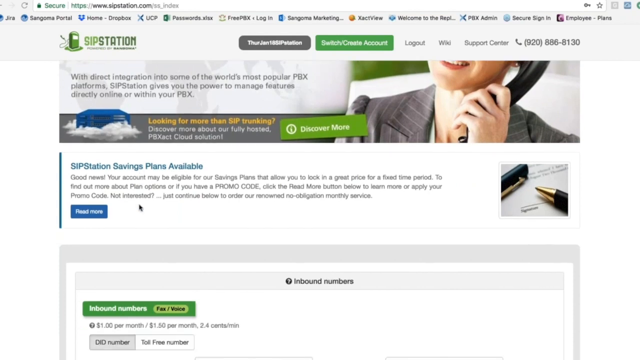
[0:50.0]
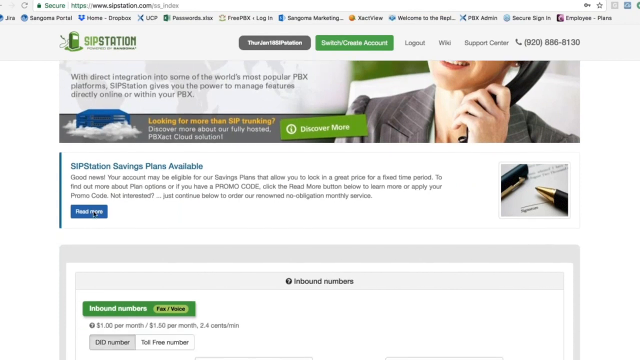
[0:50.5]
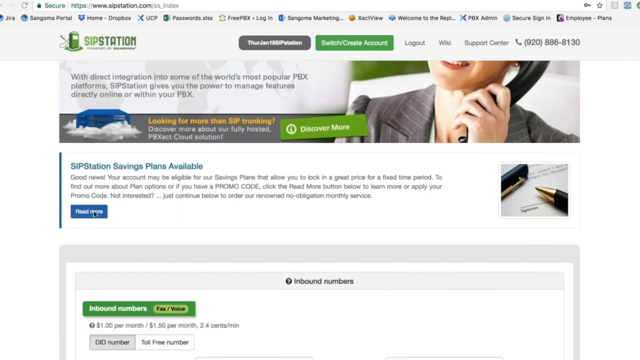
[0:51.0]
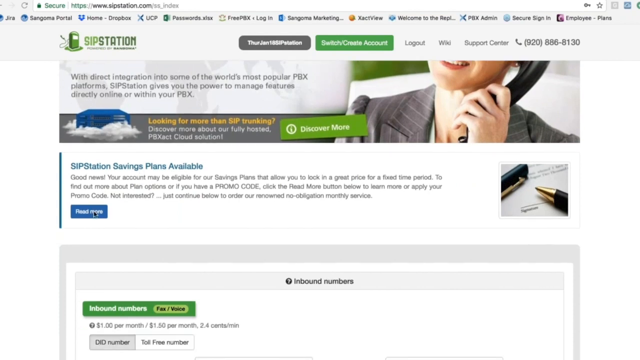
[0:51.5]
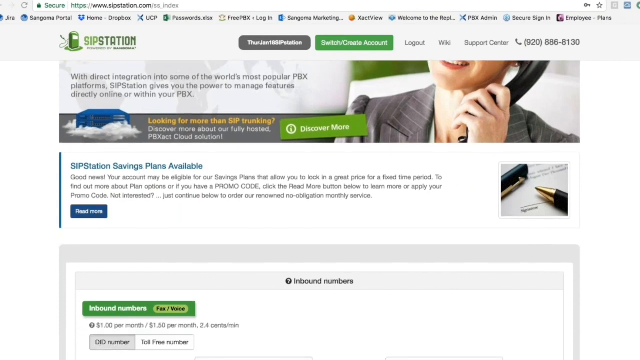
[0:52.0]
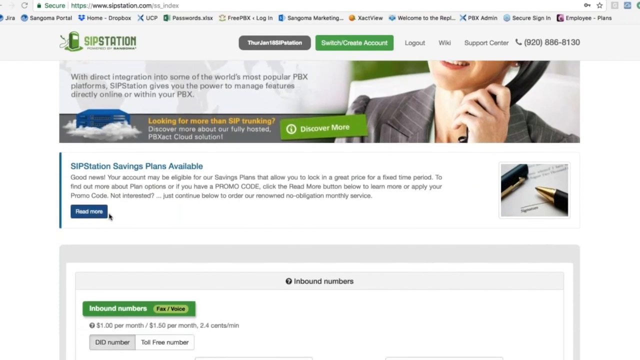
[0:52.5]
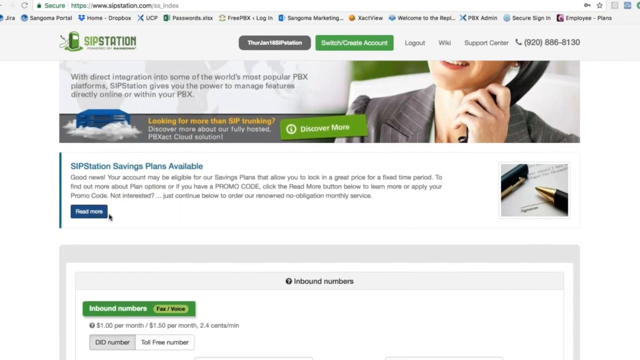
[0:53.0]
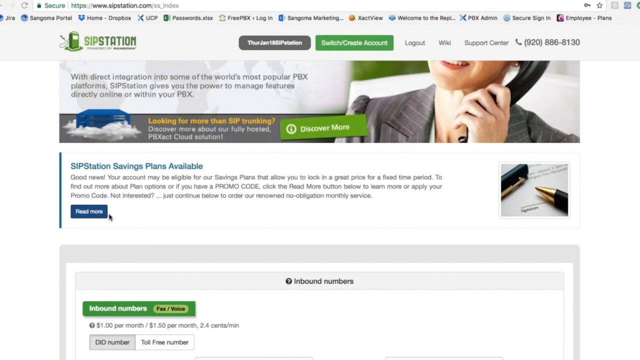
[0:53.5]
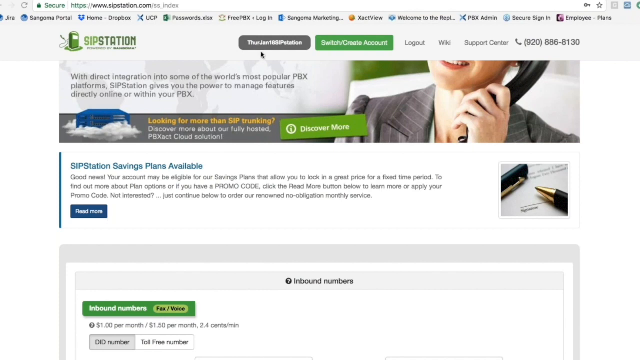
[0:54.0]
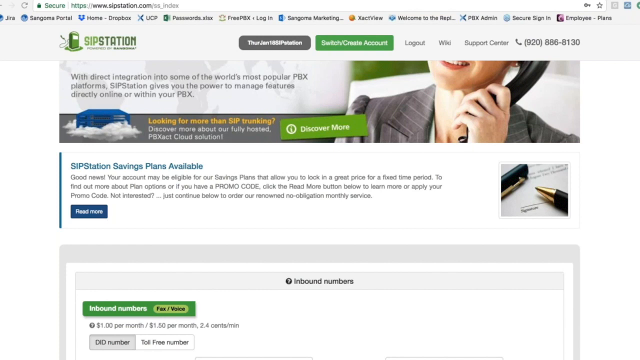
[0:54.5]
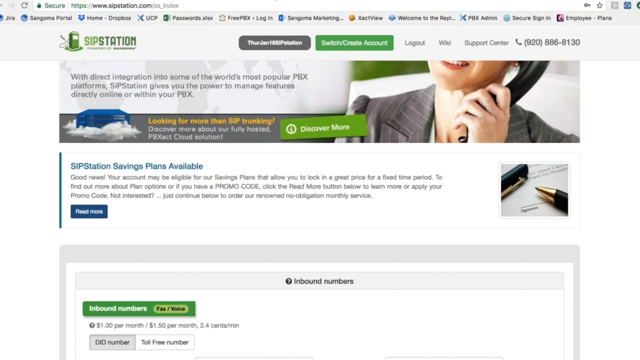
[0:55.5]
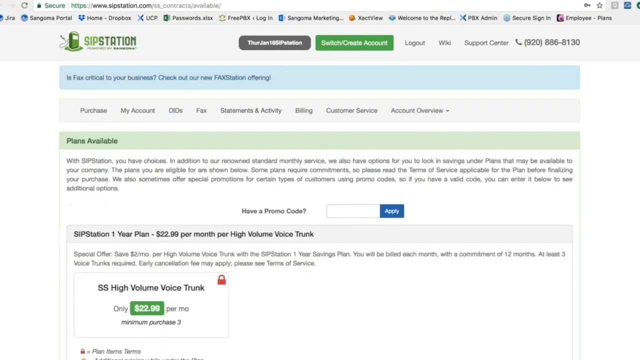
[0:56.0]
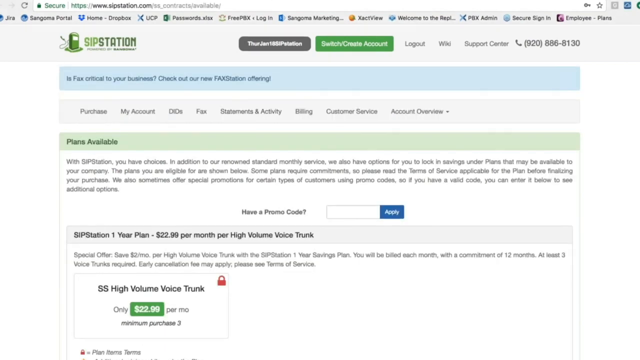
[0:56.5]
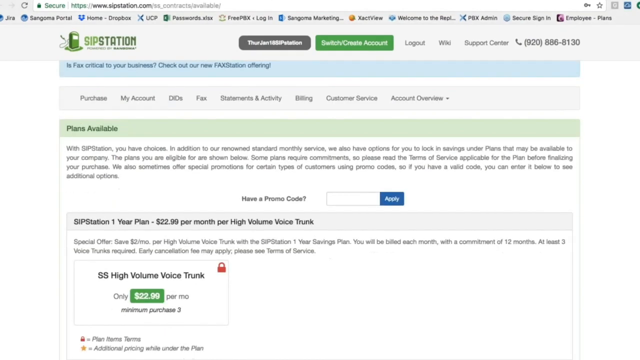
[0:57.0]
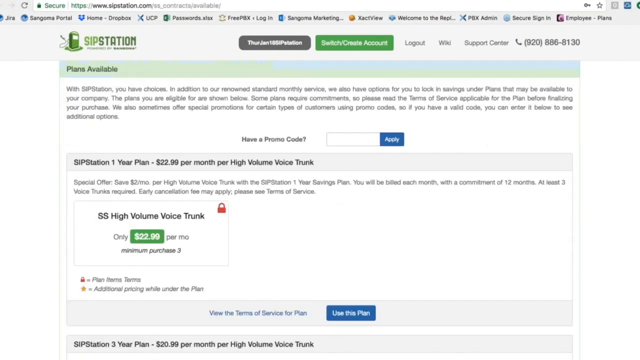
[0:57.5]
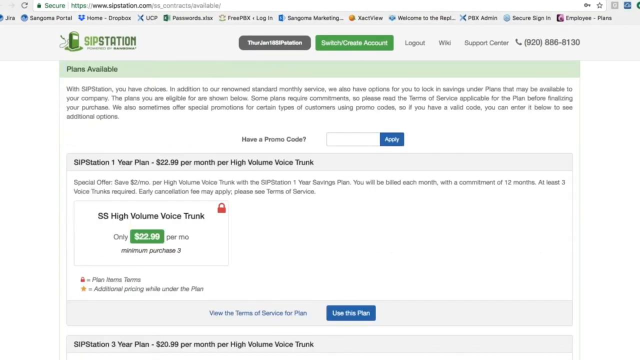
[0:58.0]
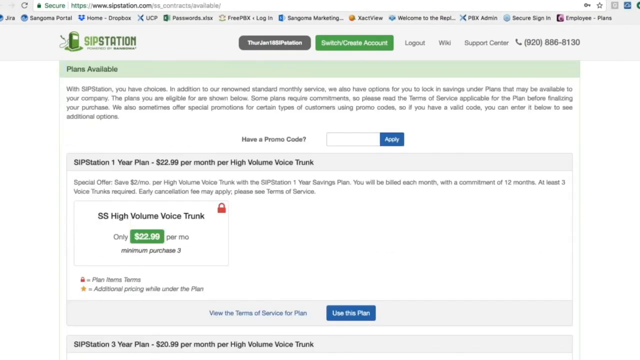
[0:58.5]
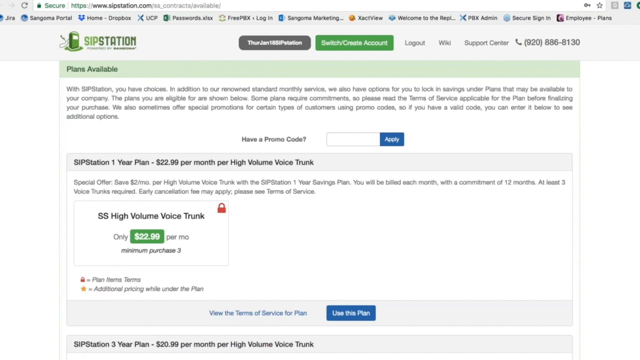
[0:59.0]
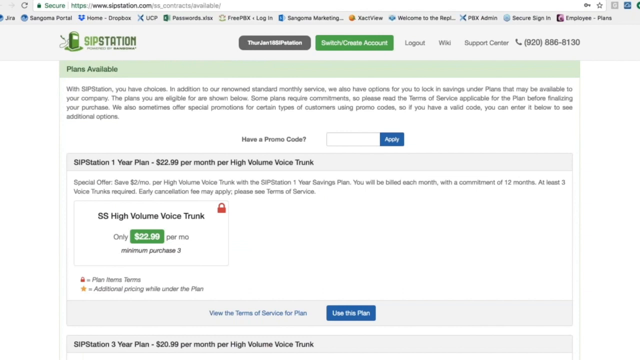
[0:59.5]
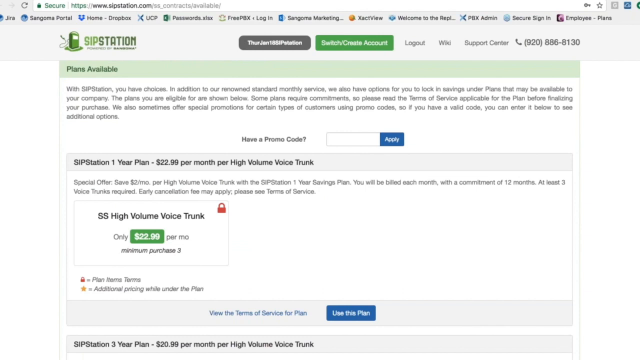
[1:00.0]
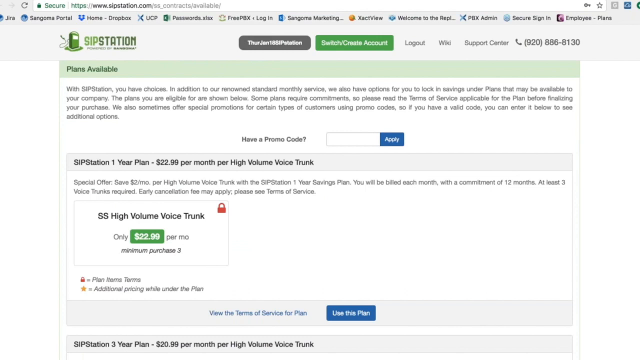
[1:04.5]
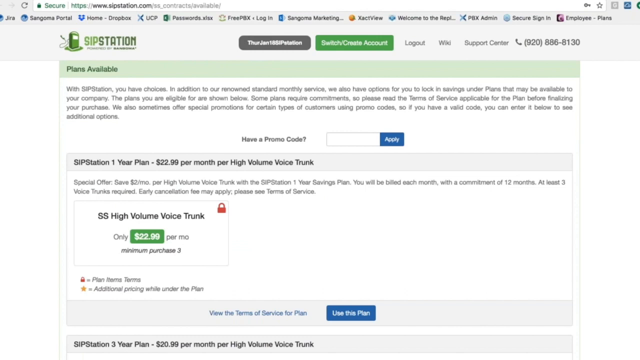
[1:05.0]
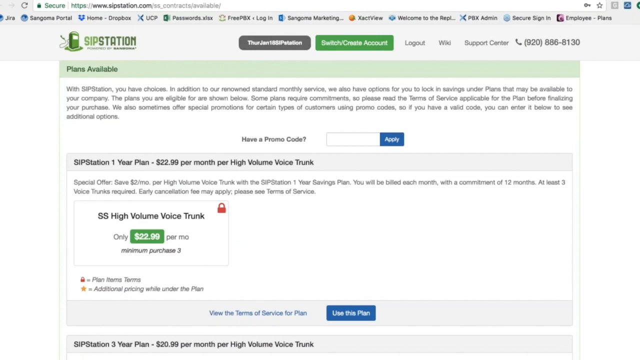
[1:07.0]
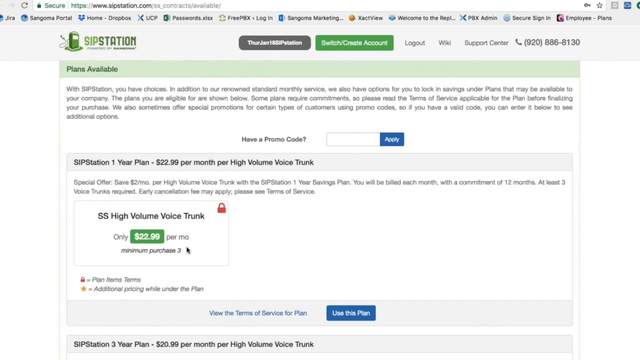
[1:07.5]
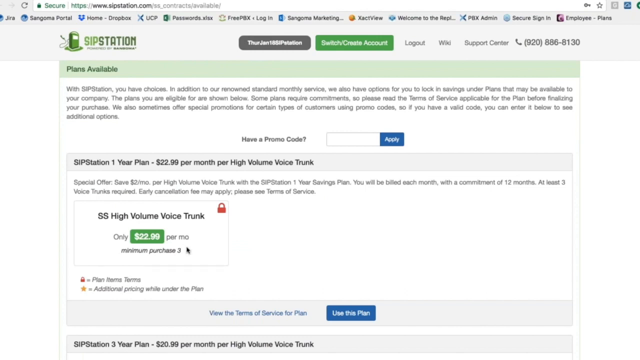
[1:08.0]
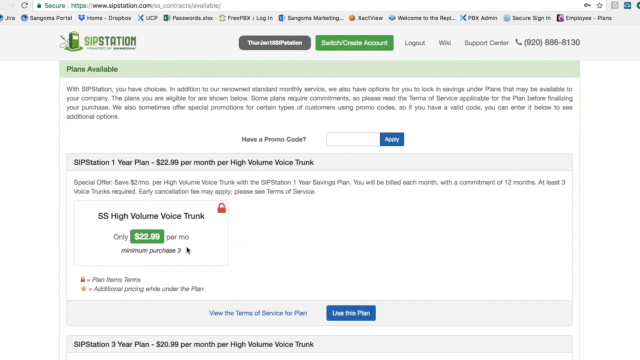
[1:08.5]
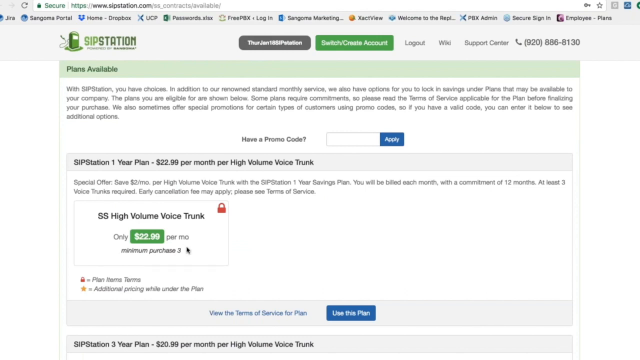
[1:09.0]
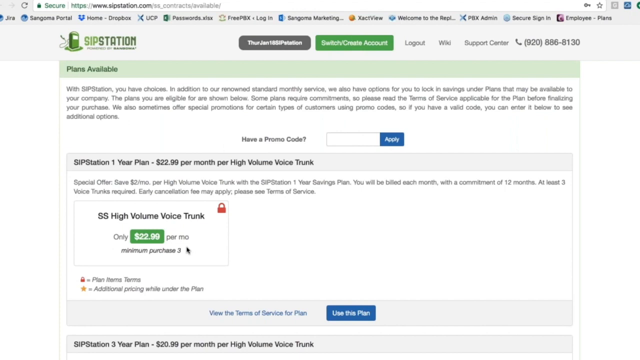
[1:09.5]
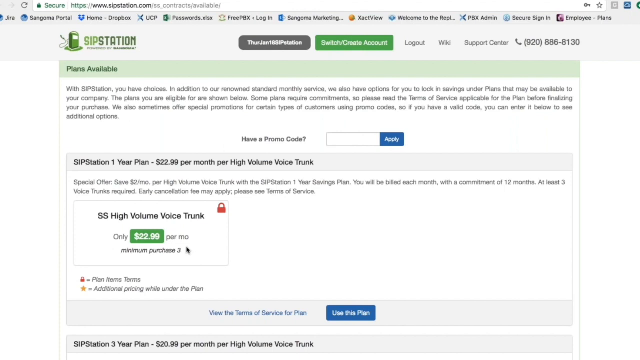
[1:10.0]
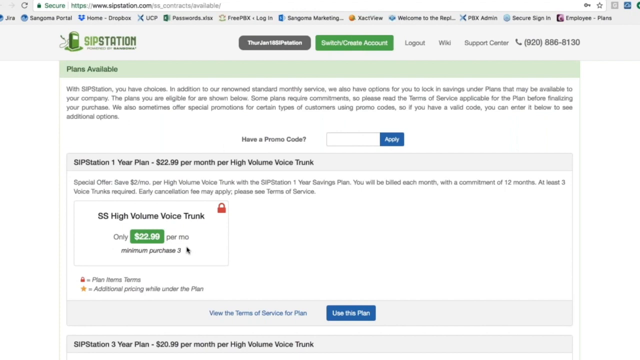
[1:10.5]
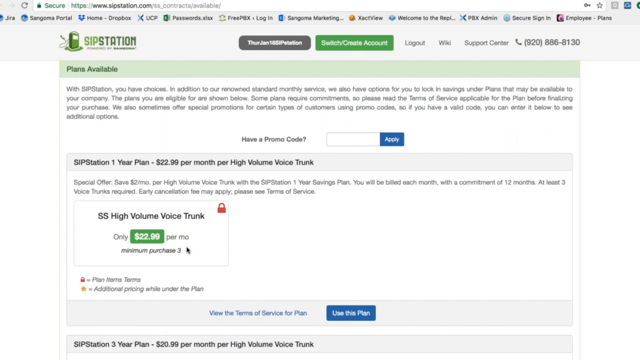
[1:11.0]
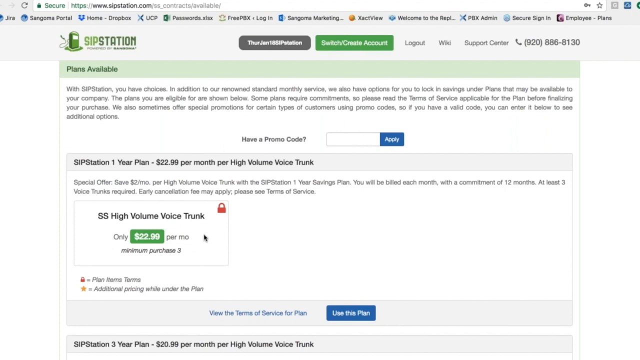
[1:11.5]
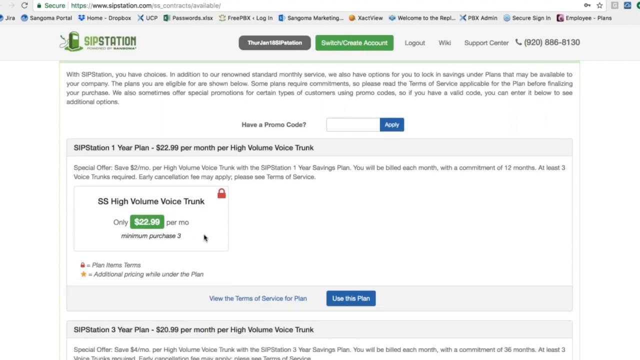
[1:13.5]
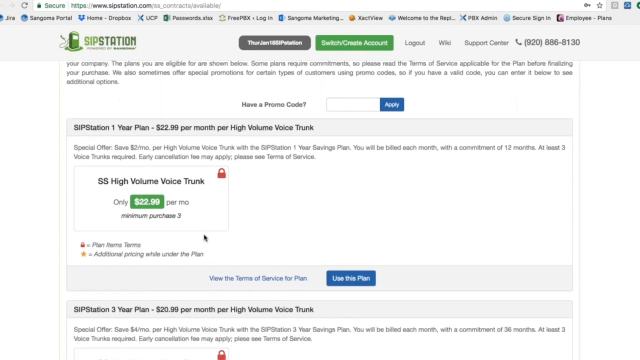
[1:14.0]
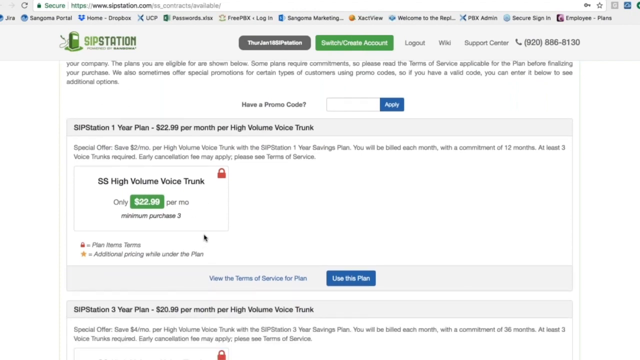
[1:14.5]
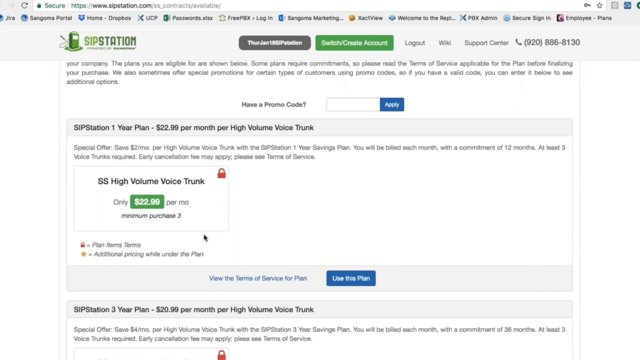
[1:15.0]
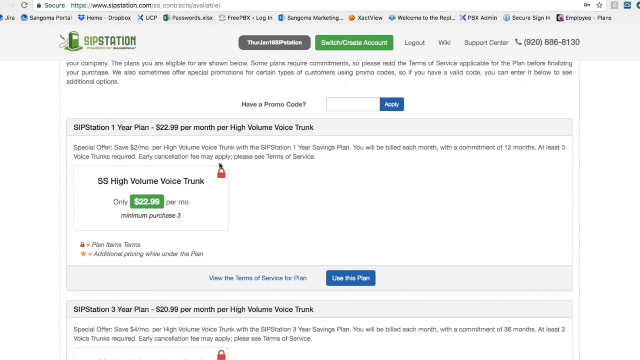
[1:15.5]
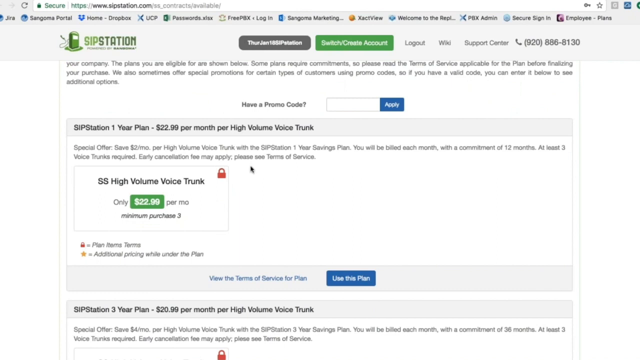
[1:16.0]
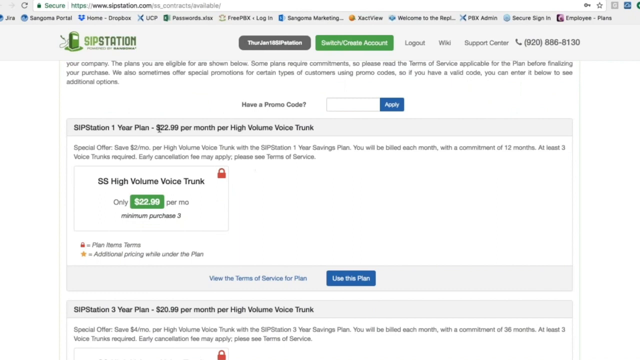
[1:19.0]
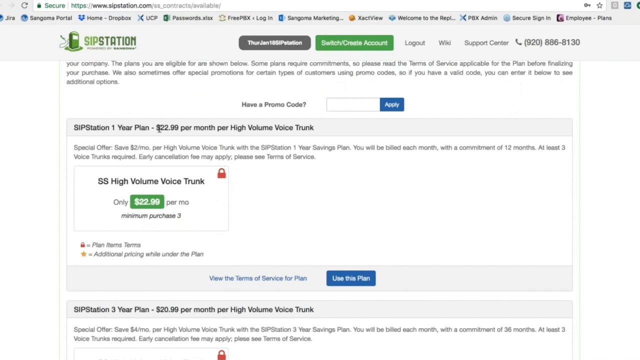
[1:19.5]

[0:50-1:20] A website says "SIPstation" at the top, and the text currently shown is the heading "SIPstation savings plan available." A mouse cursor is beneath a paragraph of text just below that heading; it highlights "read more" and clicks it, bringing up plans available. A one-year plan for $22.99 per month is shown. The page scrolls down a little more, showing more of the screen, including "SS high volume voice trunk only $22.99 per month." Other boxes are on the page, including one for entering a promo code with an apply button. The mouse cursor moves slightly within the box, then the page is pulled down before going back up just a little.